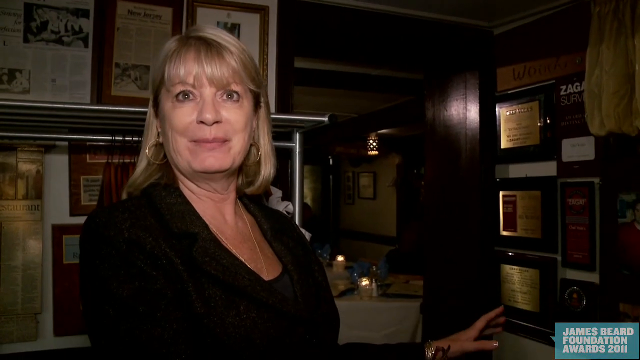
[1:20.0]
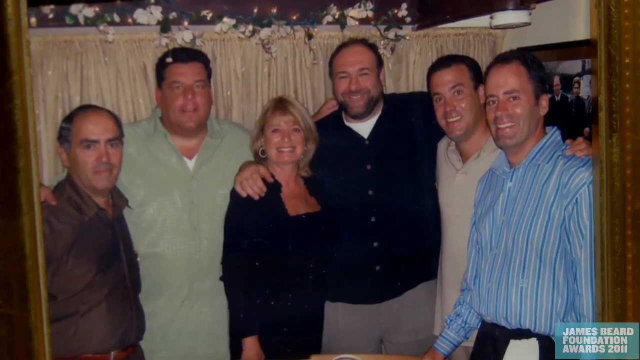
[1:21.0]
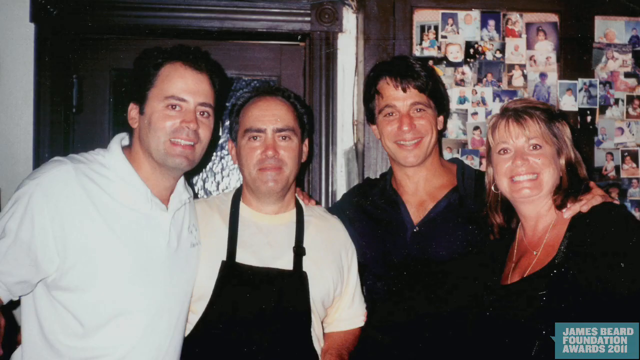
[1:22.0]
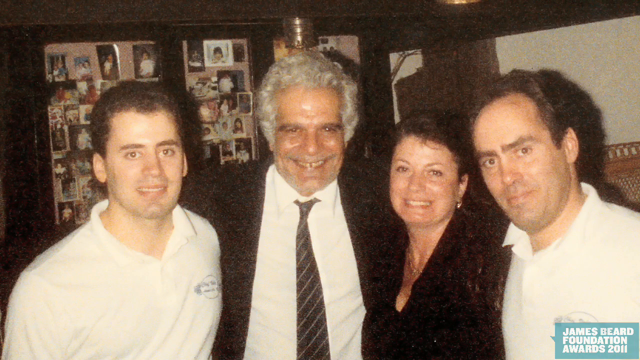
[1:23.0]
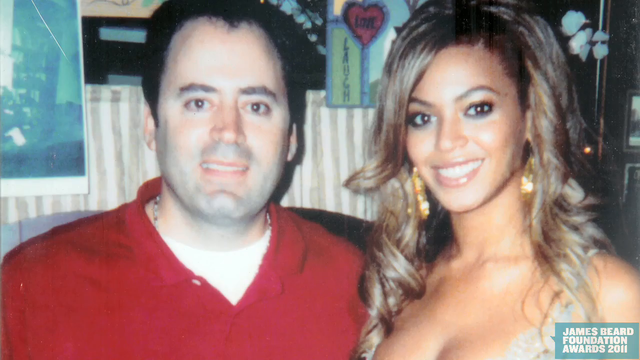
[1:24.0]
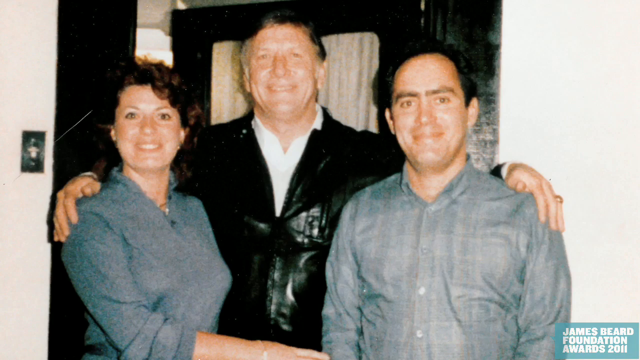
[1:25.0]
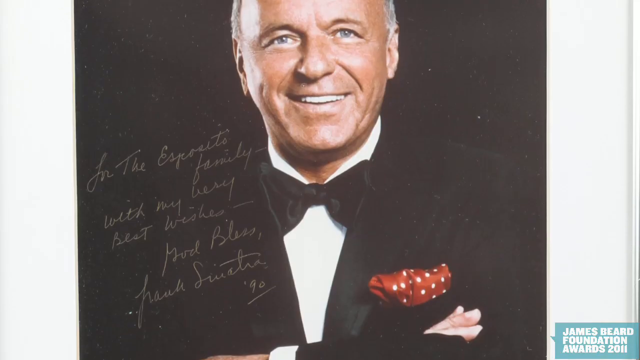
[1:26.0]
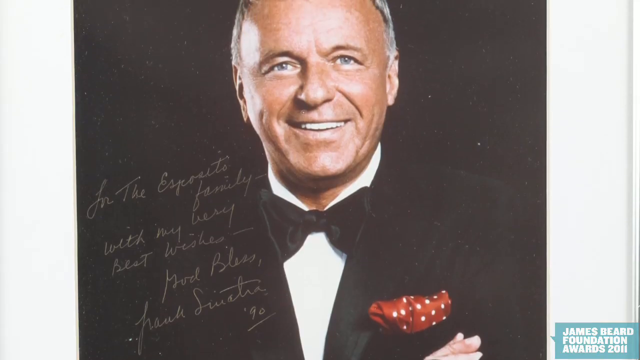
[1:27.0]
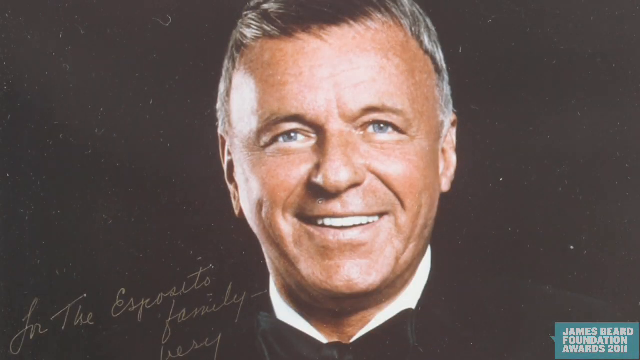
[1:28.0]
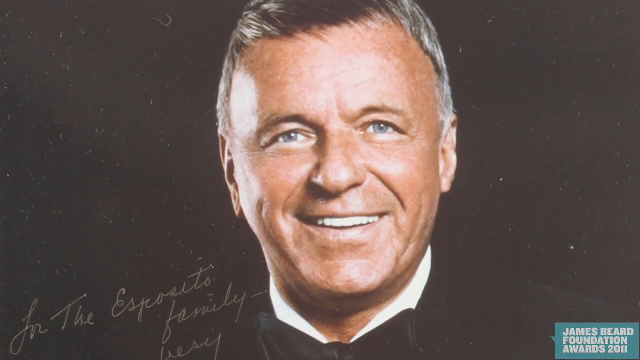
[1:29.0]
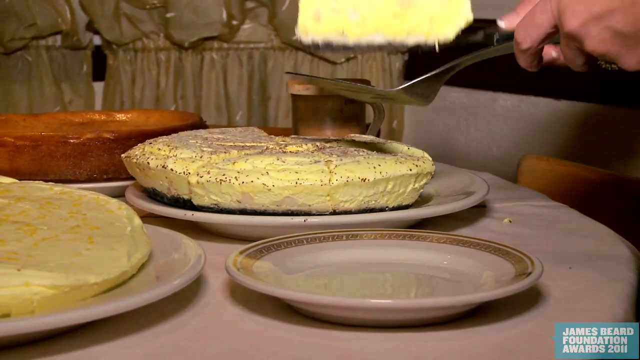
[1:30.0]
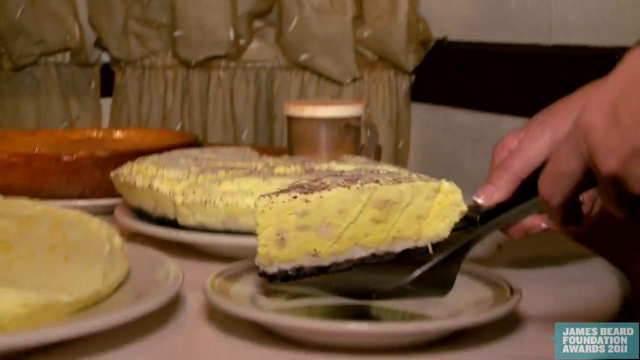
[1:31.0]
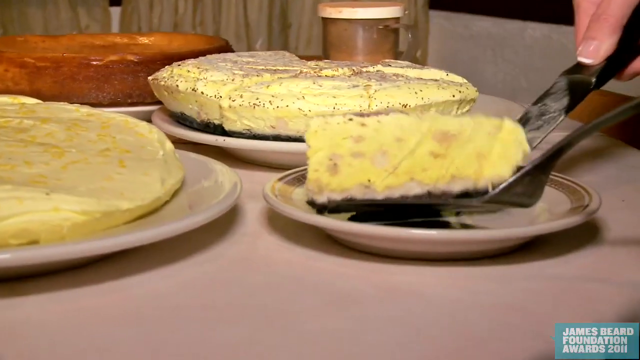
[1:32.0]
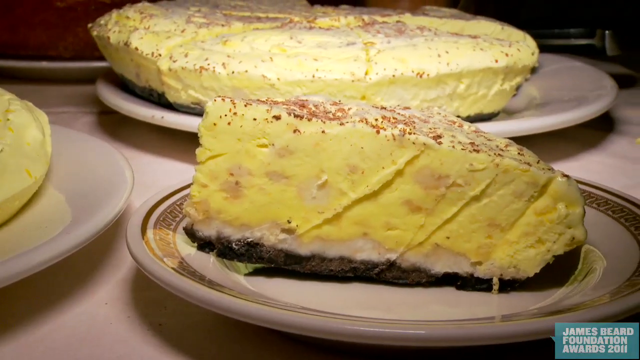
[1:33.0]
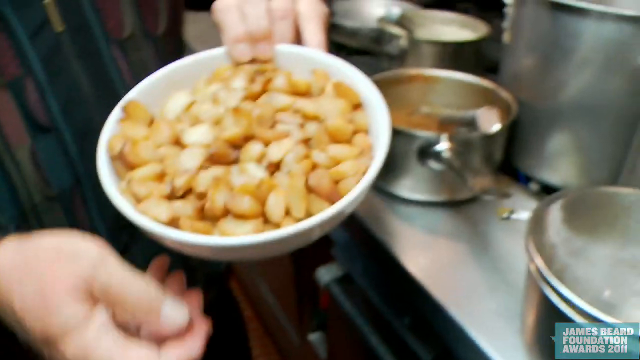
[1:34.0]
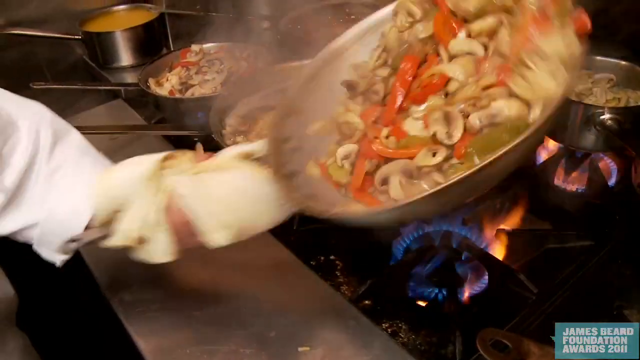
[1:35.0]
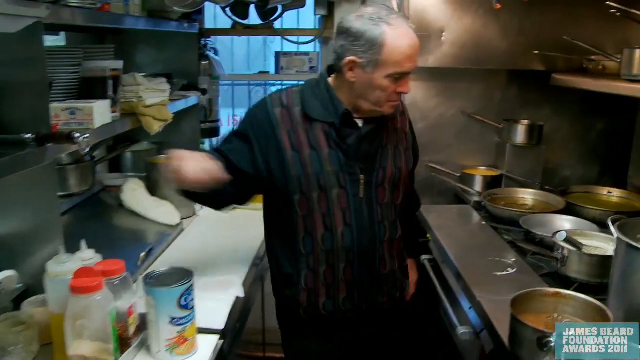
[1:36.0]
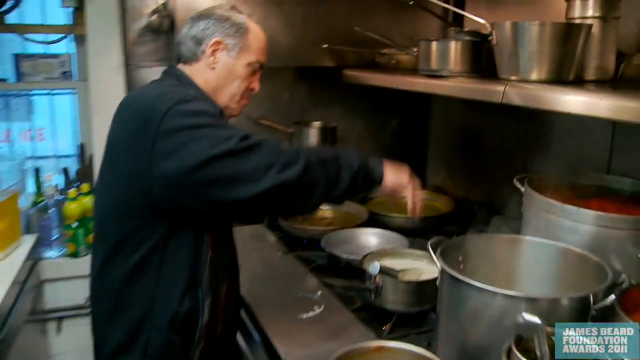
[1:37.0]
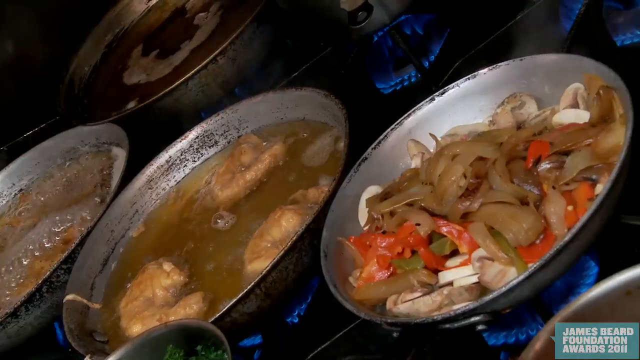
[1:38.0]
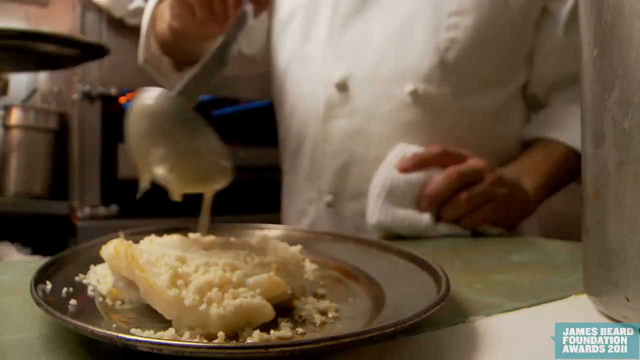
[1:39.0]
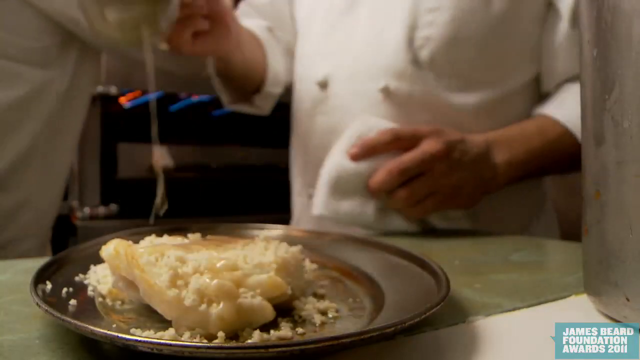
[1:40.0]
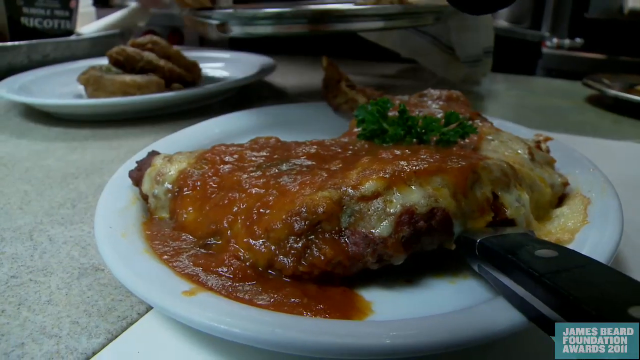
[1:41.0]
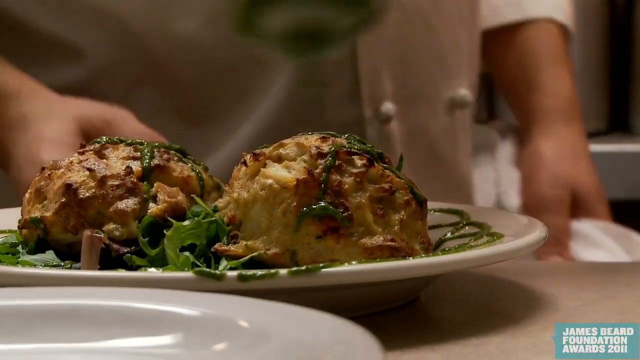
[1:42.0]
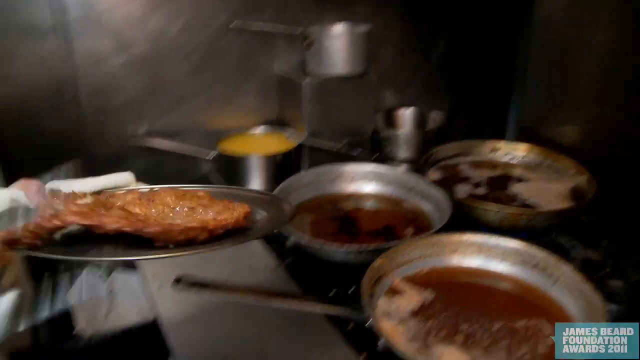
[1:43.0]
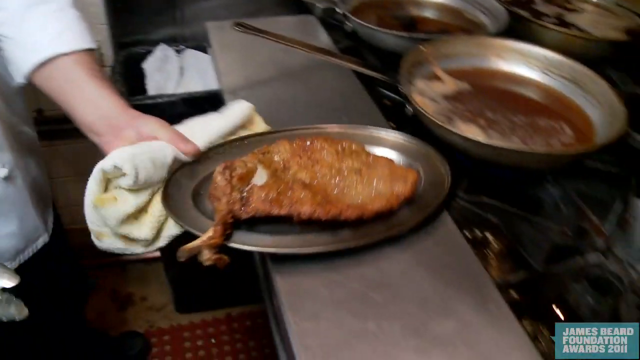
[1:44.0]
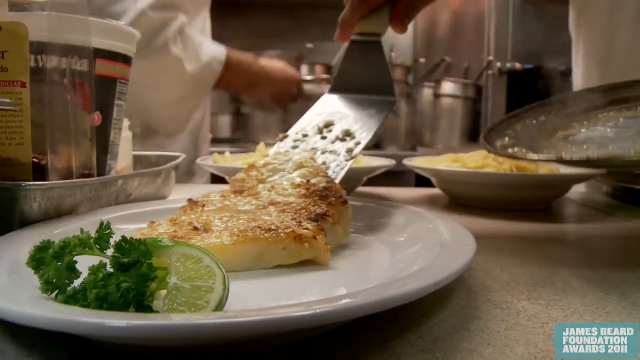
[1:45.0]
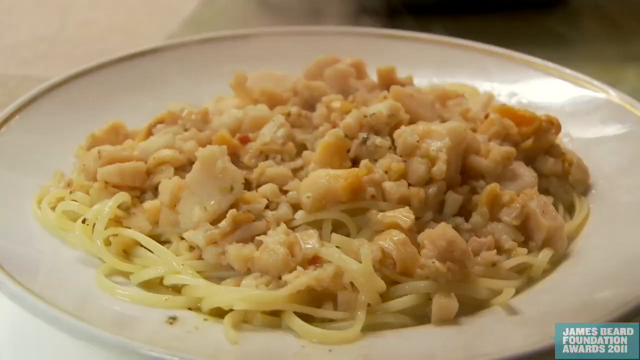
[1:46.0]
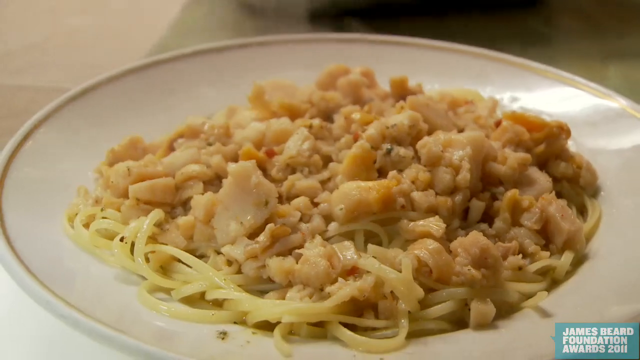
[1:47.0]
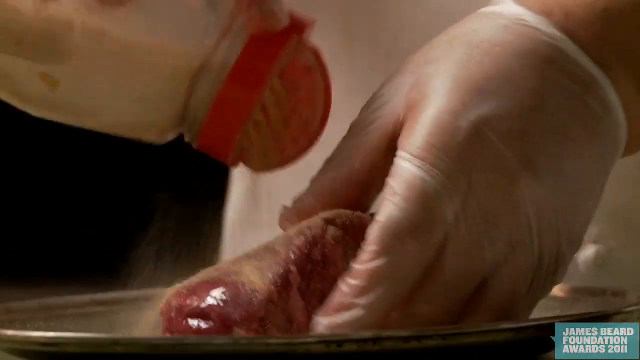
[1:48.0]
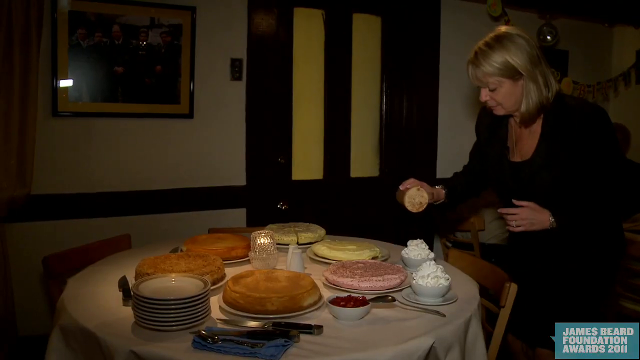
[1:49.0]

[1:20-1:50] Several pictures and photos are shown: one has six people, five gentlemen and one lady; a closer picture has four gentlemen; another has three; and another has two. Old-school pictures move across the screen, showing the men behind all of this. The camera then moves into a kitchen where cooking is going on. Pieces of cake are put on several plates as the camera zooms in closely. One person holds a plate of beans, and another holds a plate of beef with some garlic and tomatoes and then flips them back. An old man is also cooking in the kitchen, and the camera shows a close-up of the cooking. A piece of beef is ready, and it is being made ready on the table for supper.